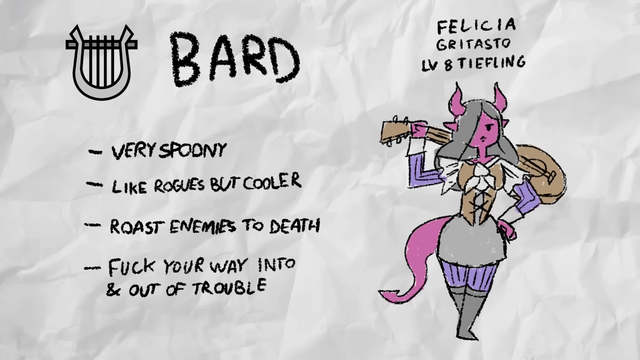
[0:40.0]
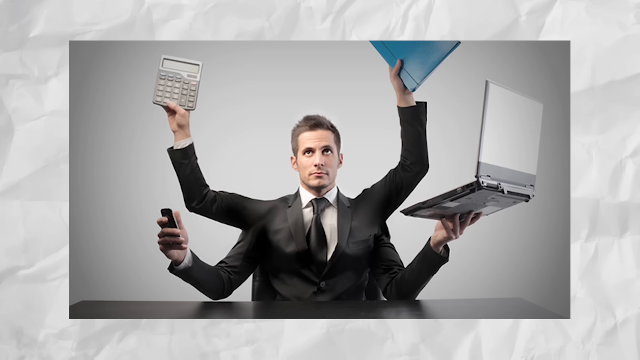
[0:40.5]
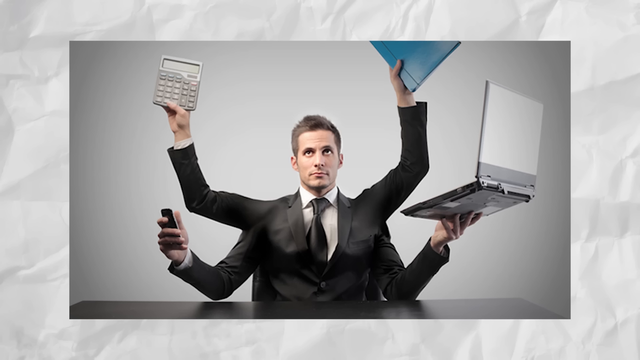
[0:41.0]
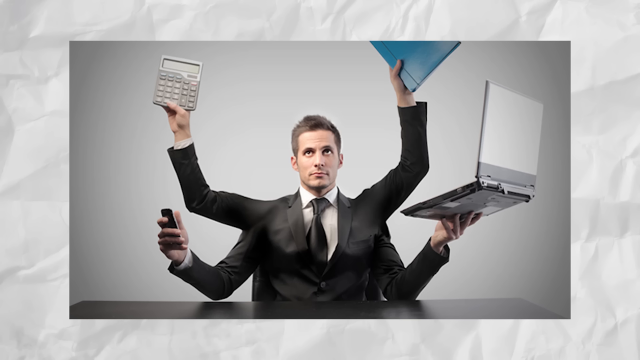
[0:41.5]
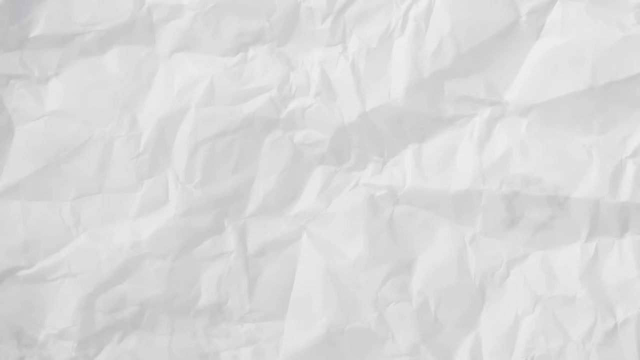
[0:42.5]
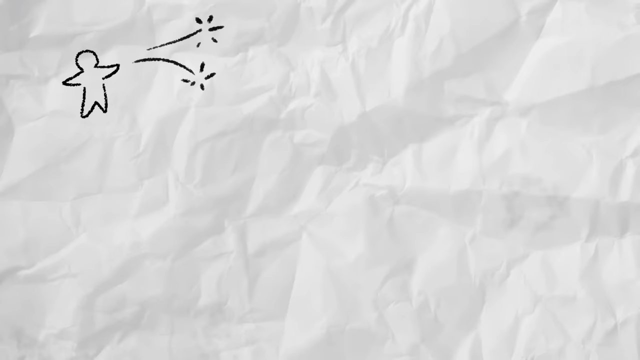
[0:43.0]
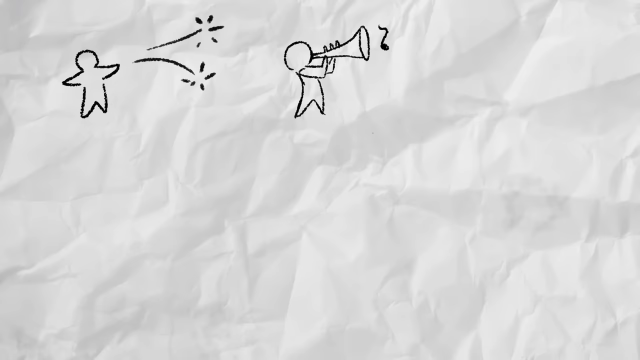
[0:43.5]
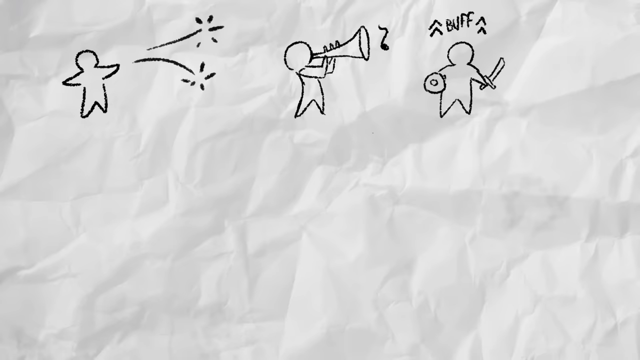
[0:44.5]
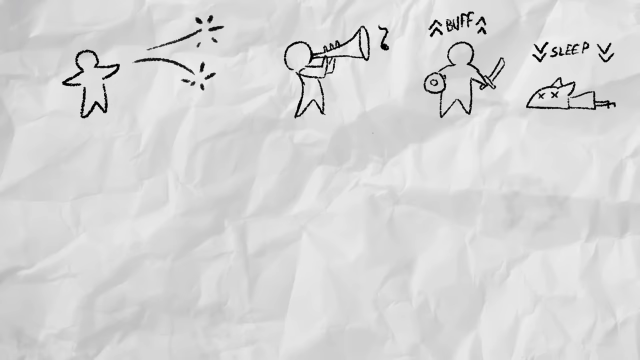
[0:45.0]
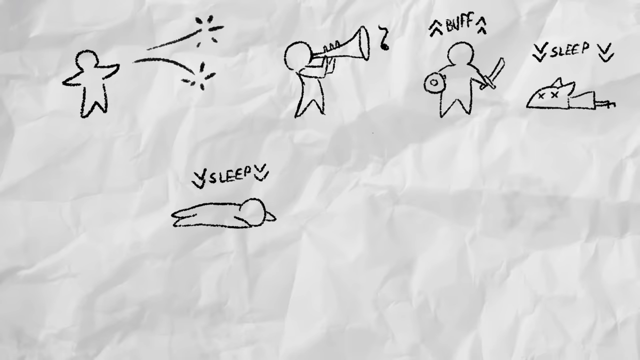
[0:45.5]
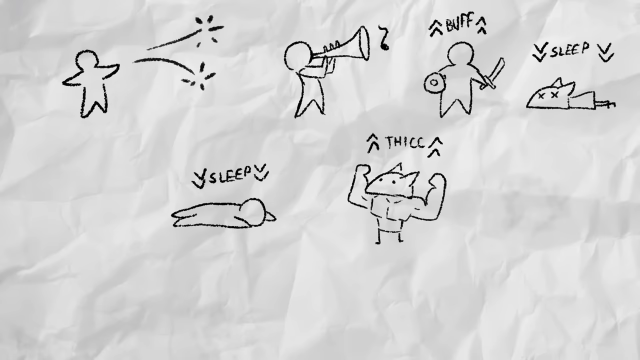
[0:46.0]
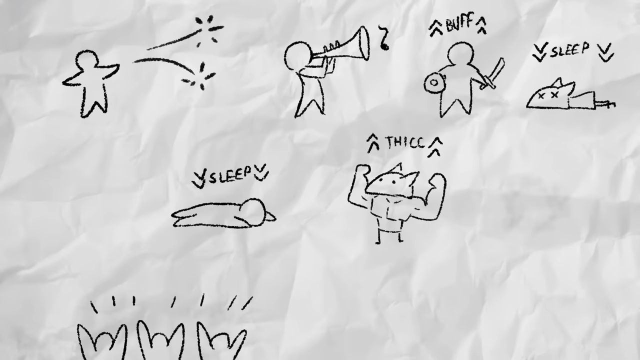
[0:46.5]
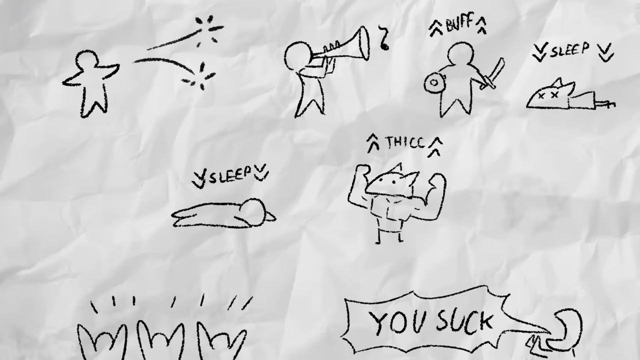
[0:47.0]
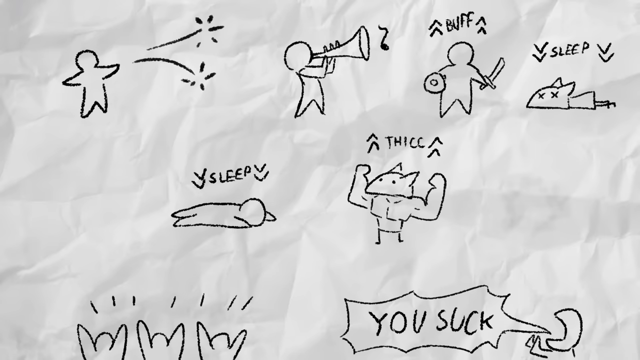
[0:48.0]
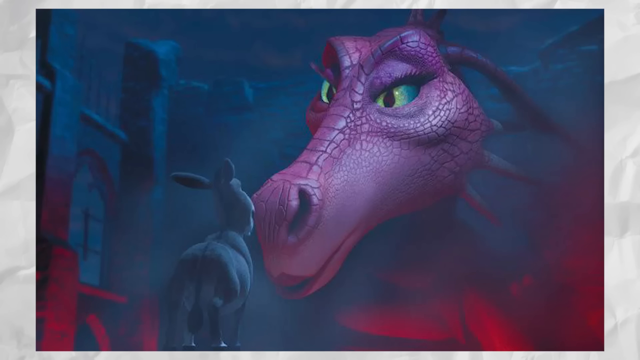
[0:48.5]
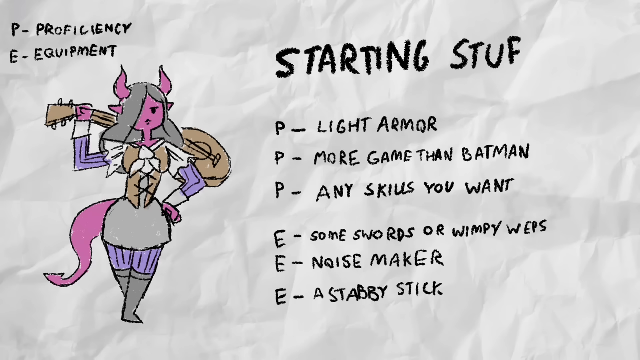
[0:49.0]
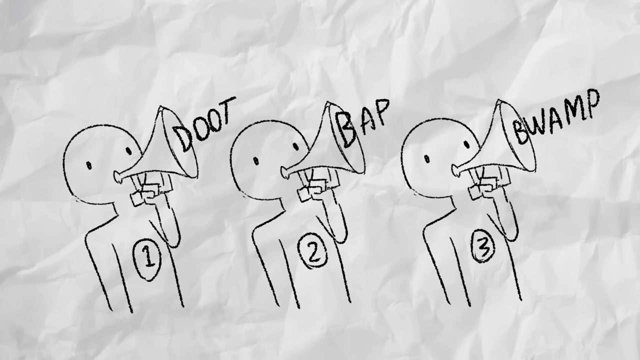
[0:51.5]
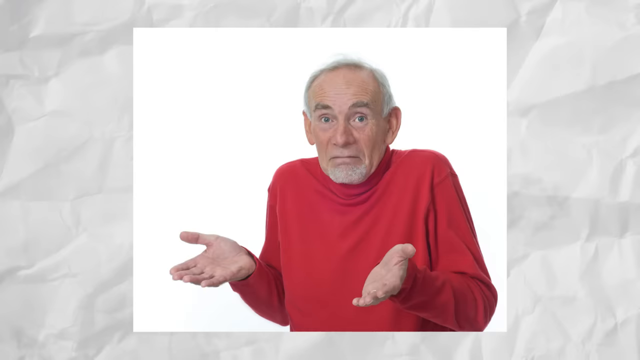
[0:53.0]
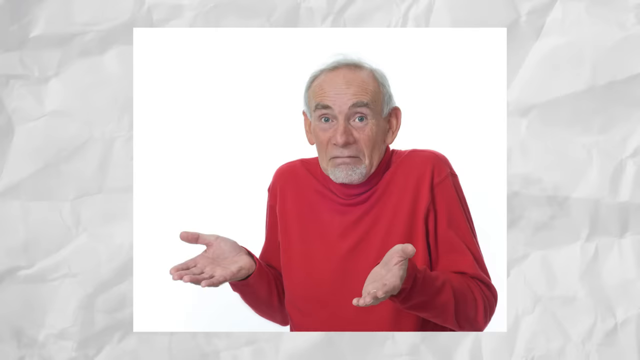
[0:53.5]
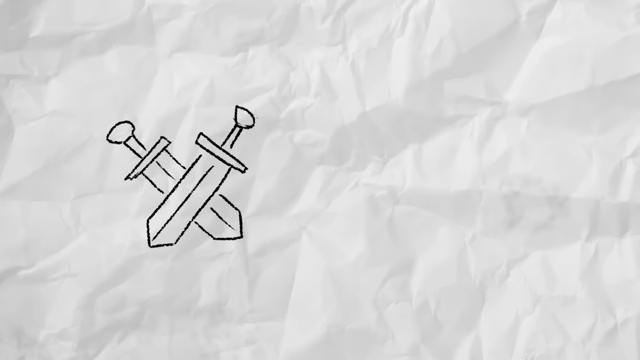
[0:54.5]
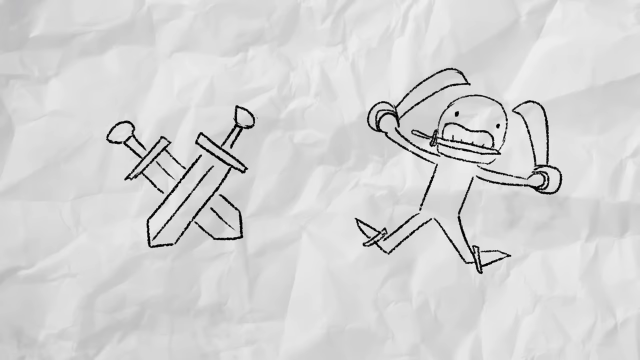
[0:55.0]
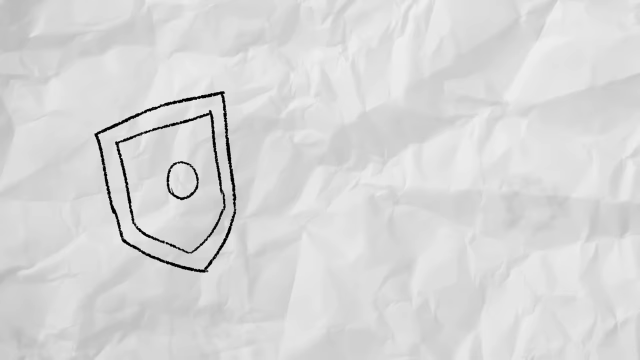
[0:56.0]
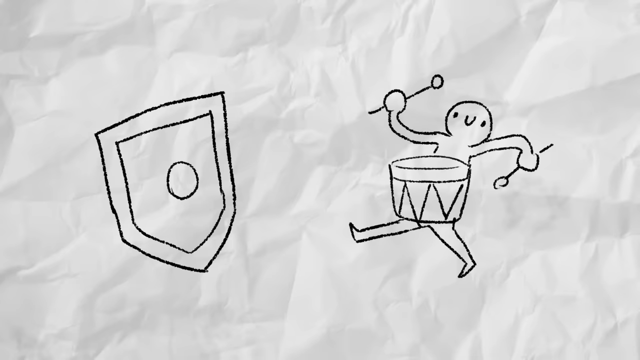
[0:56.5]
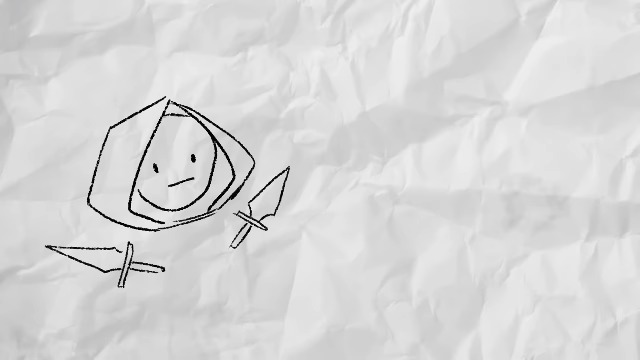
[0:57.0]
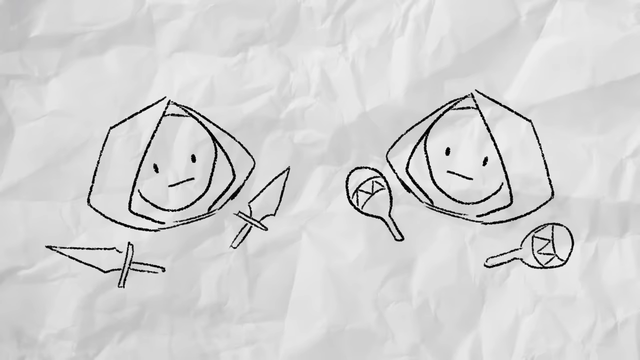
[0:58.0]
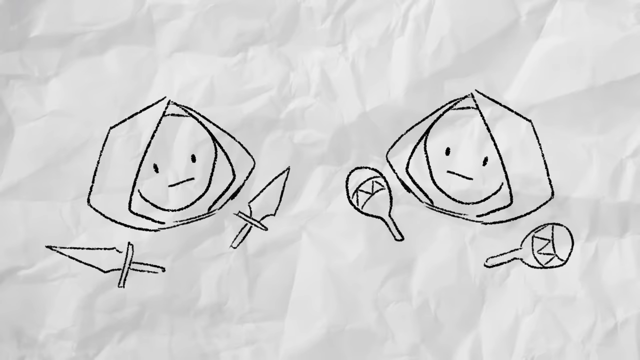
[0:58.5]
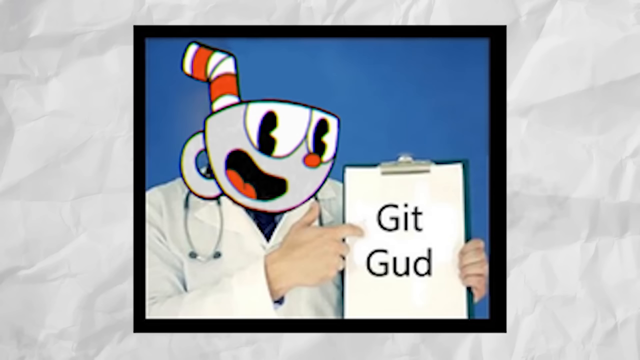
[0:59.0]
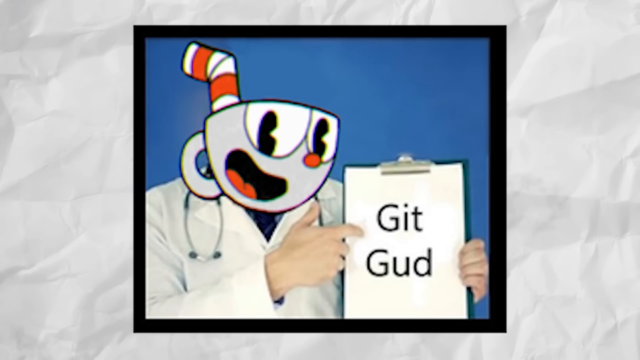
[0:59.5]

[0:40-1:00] A grey harp logo is in the upper left corner, and "BARD" is written at the very top in black chalkboard-like text. Below are four dashed lines: "VERY SPOONY", "LIKE ROGUES BUT COOLER", "ROAST ENEMIES TO DEATH" and "FUCK YOUR WAY INTO AND OUT OF TROUBLE". On the left, the same font reads "FELICIA GRATASTO LV-8 TIEFLING" at the top, and below is a drawing of a woman mixed with a devil: pink skin, pink horns, a pink devil tail, a brown corset top, a grey skirt, purple undergarments, long grey hair, and a brown ukulele carried behind her neck. The frame changes to an image, over the white crumpled paper, of a businessman in a black suit with four arms: one on the left holds a calculator up in the air, one on the upper right holds a folder, the bottom right hand holds a computer with its screen open, and the bottom left hand holds a cell phone or clicker. Next comes a frame of drawn figures: one in the upper left has two shooting stars coming off its right hand; one plays a trumpet with musical notes coming out; one holds a shield and sword under the text "buff"; one lies on the ground sleeping with X's for eyes under the text "sleep"; one lies face down on the ground under the text "sleep"; and one with big muscles, skinny stick legs and pointy ears holds up his muscles under the text "Thick" with two C's. At the bottom are three figures with their arms in the air, and on the right a figure yells "you suck" in a conversation bubble. The screen quickly transitions to a still image of the pink dragon and Donkey from Shrek kissing, with the dungeon scene in the background. The next scene has a lot of text. In the upper left, the first line reads "P-Proficiency" and the line below reads "E-Equipment". Below the text on the left is the same half-woman, half-devil figure, still with the brown ukulele behind her, pink skin, pink horns, a tail, long gray hair, a brown corset, a gray dress, gray socks and purple undergarments. On the right, text reads "Starting Stuff", with "Stuff" spelled with one F, followed by lines reading "P-Light Armor", "P-More Game Than Batman", "P-Any Skills You Want", "E-Some Swords or Wimpy Weps", "E-Noisemaker" and "E-A Stabby Stick". All the text is in the black chalkboard-like font on the white crumpled paper background. Next, three figures hold up matching trumpets: the first has a number one on the front of his body and "doot" coming out of his trumpet, the second has a two and "bap", and the third has a three and "BWAMP". Then an image over the white crumpled paper shows an old man in a red shirt with his hands in the air, palms up, looking confused. Back on the crumpled paper, a drawing of two crossed swords is on the left, and on the right a figure holds two swords upright in his arms, has two swords as feet and a sword between his teeth. In the next scene, a drawing of a shield is on the left, and on the right a figure holding drumsticks plays a drum in the center. Then two figures are shown with only their heads visible, covered in cloaks; the one on the left has two swords or daggers and the one on the right has two macarenas. Finally, an image over the crumpled paper shows, inside a black frame, a doctor in a white lab coat whose head is replaced by a red cuphead figurine; he holds up a clipboard with writing in which "good" is spelled "GUD", and points at it.